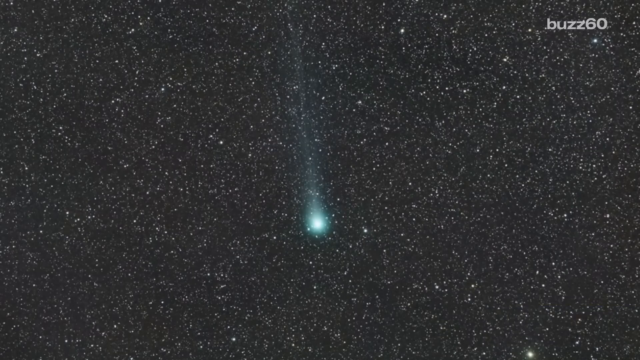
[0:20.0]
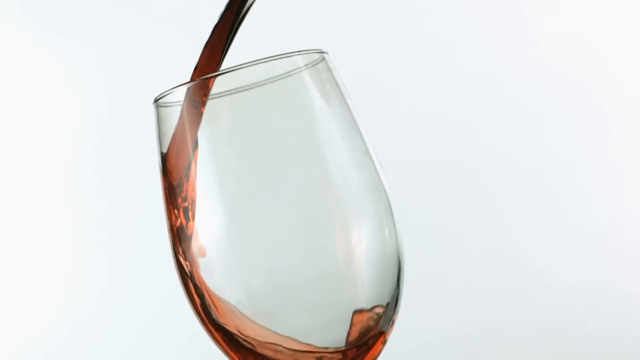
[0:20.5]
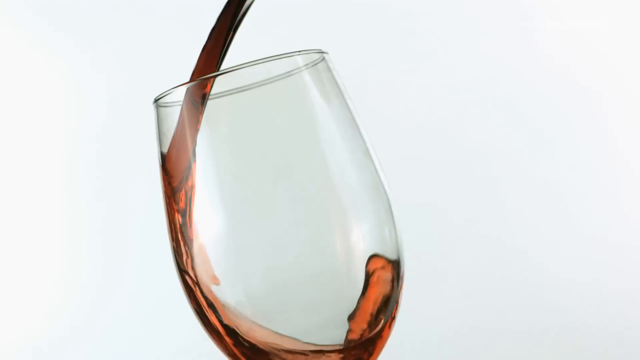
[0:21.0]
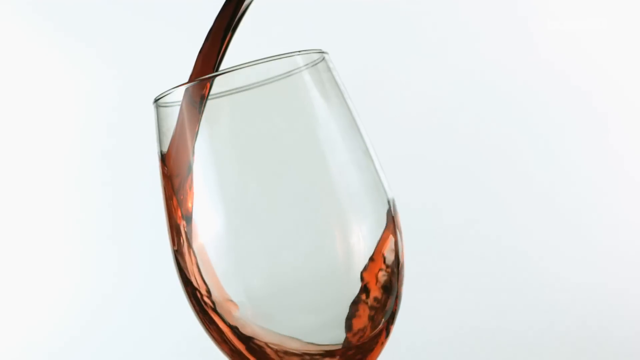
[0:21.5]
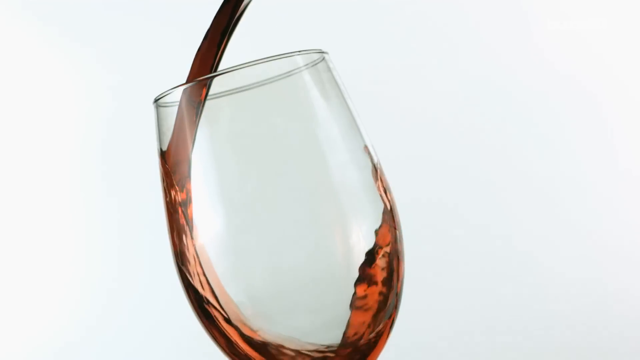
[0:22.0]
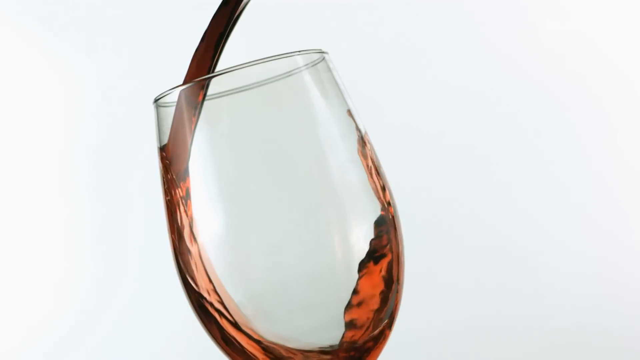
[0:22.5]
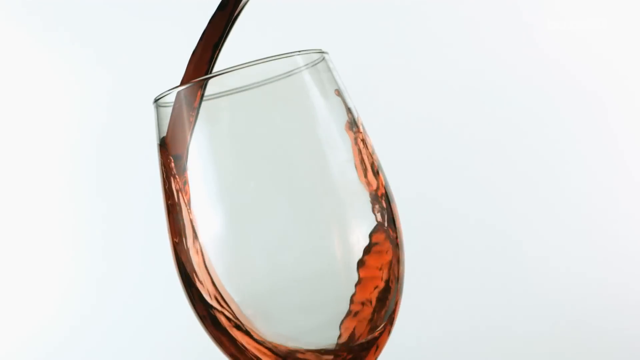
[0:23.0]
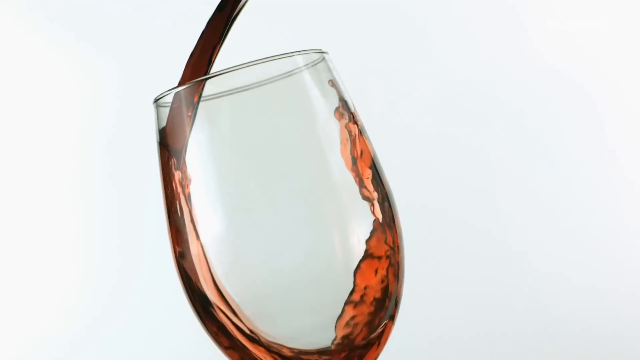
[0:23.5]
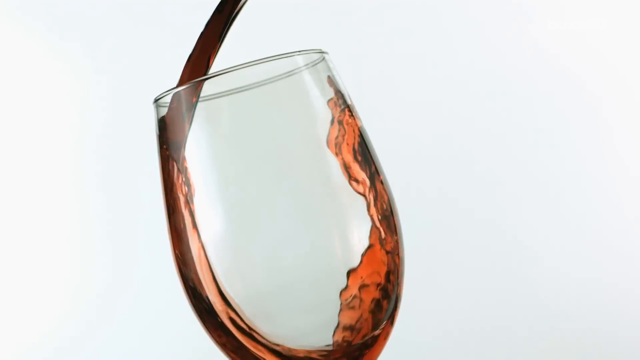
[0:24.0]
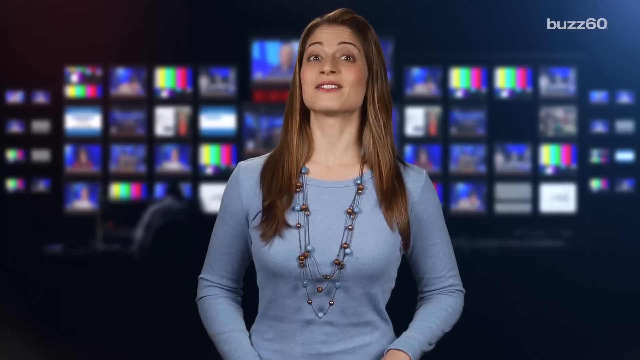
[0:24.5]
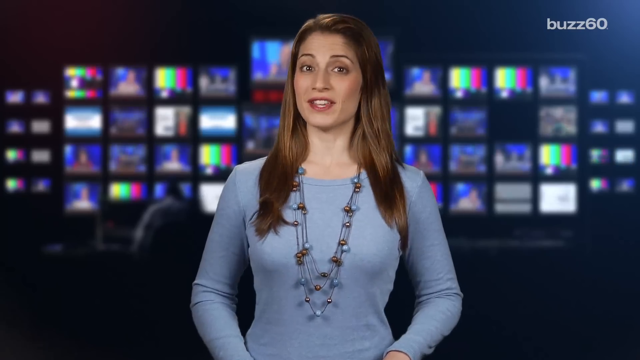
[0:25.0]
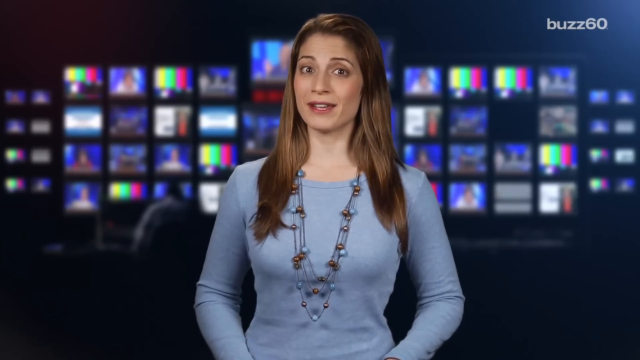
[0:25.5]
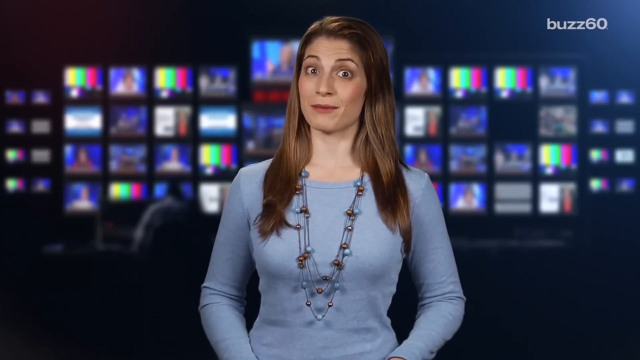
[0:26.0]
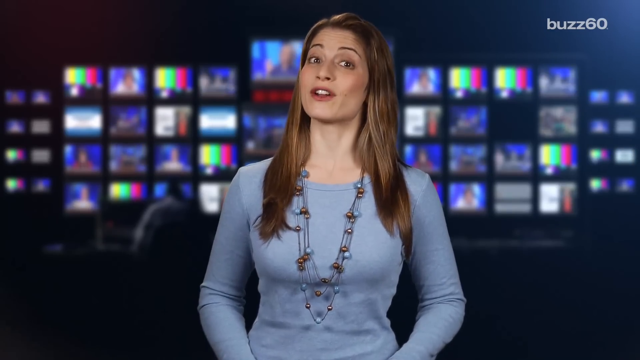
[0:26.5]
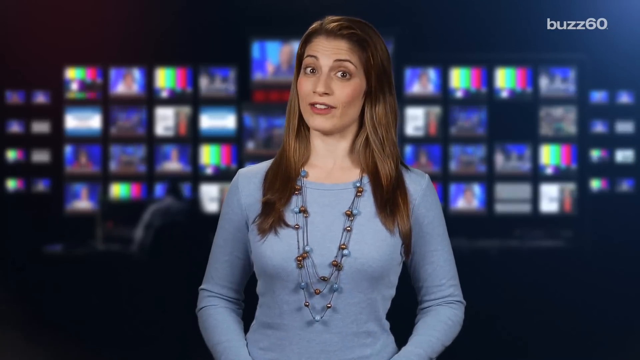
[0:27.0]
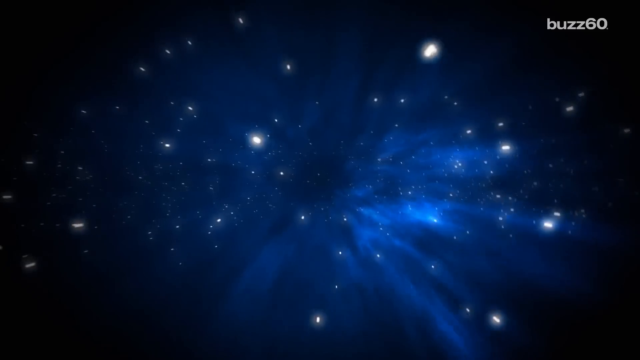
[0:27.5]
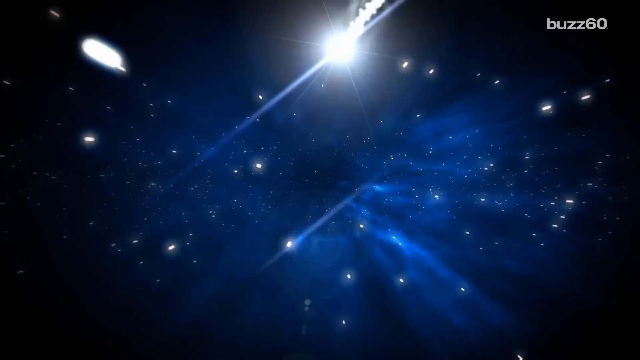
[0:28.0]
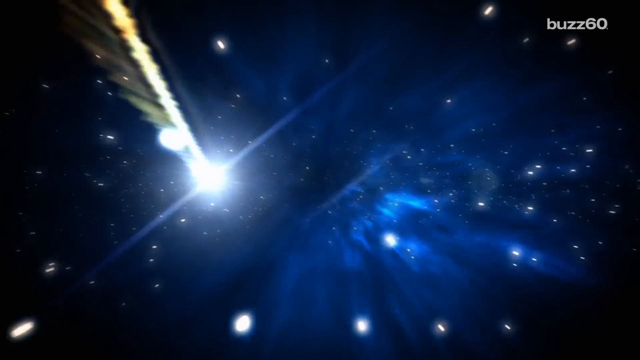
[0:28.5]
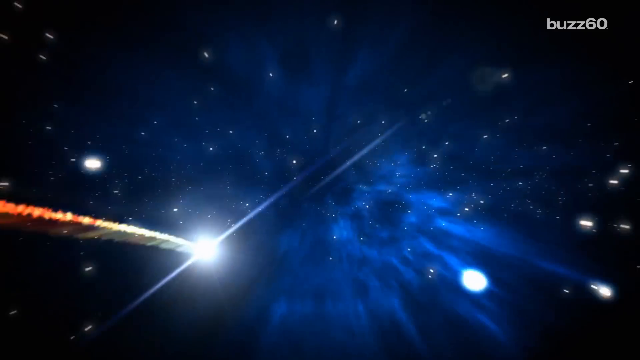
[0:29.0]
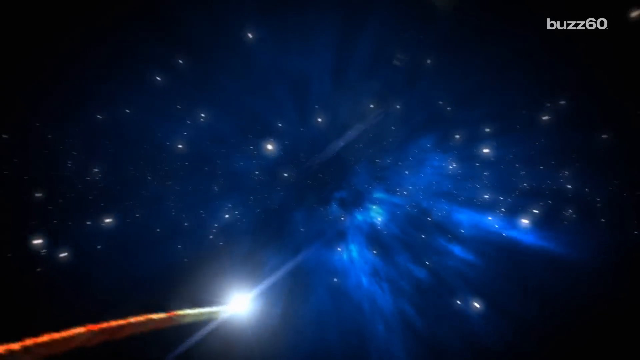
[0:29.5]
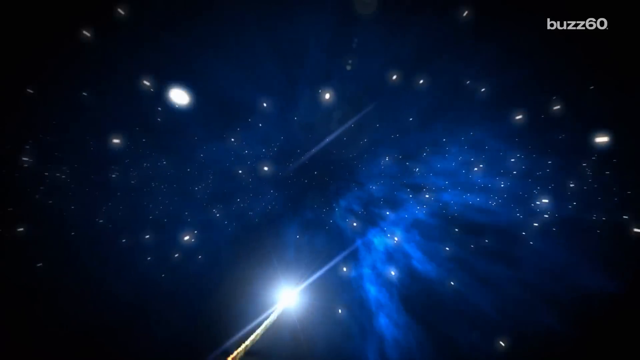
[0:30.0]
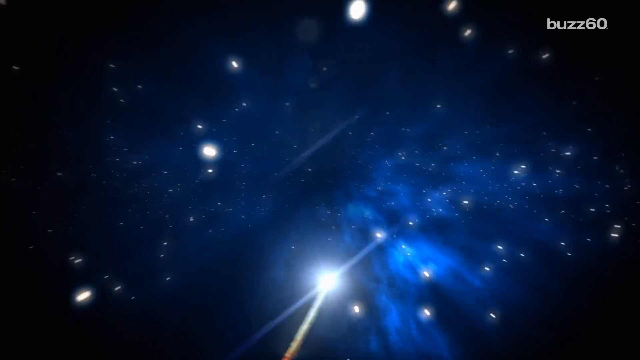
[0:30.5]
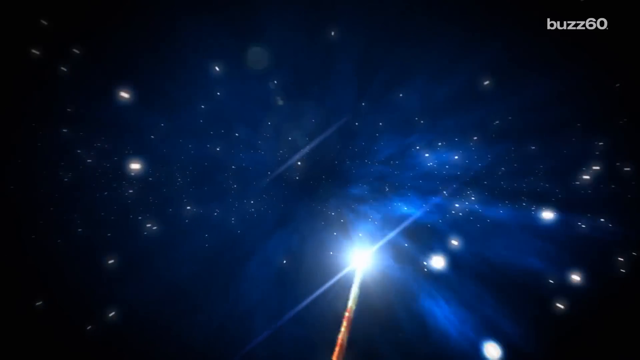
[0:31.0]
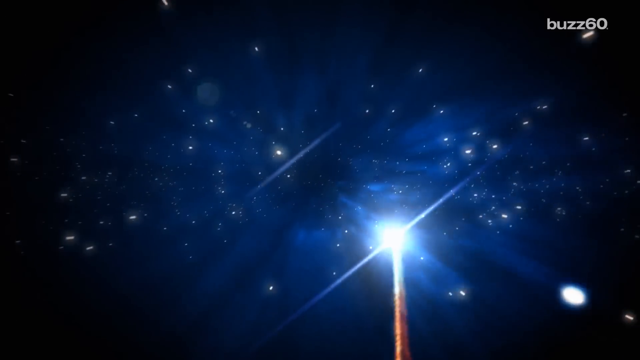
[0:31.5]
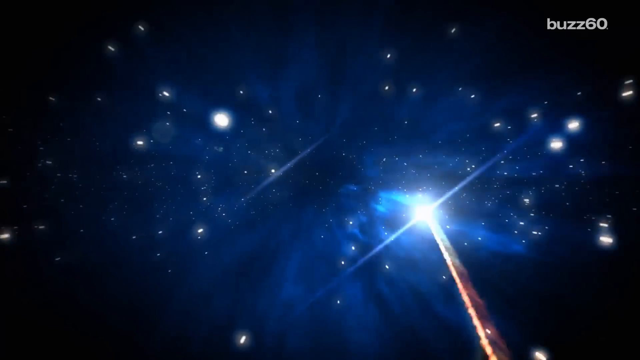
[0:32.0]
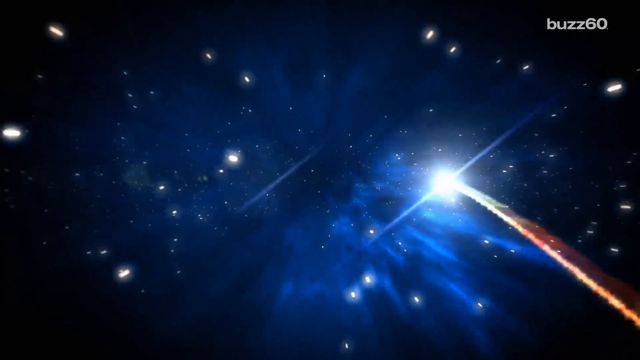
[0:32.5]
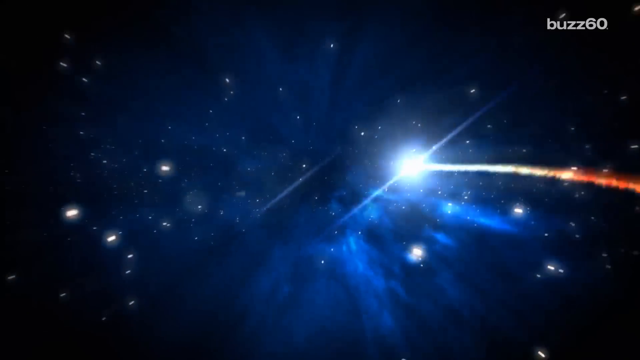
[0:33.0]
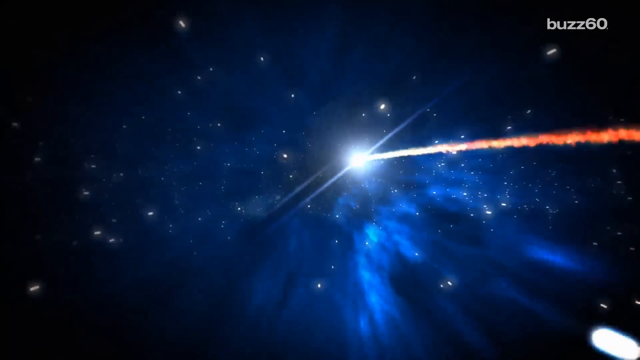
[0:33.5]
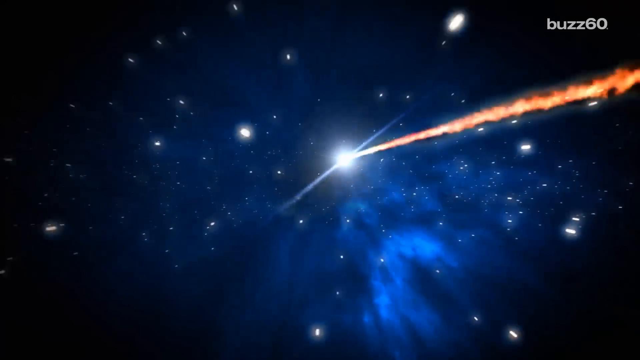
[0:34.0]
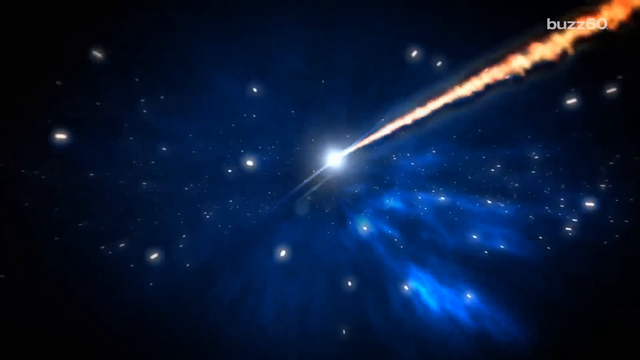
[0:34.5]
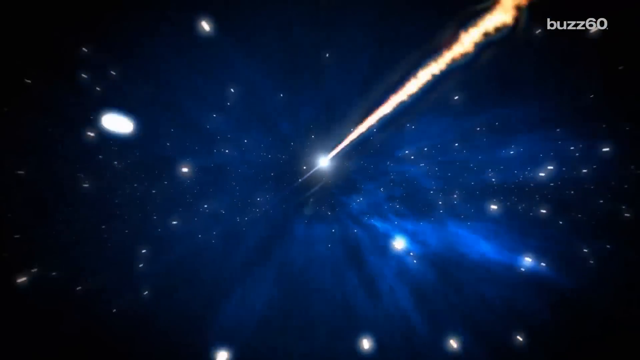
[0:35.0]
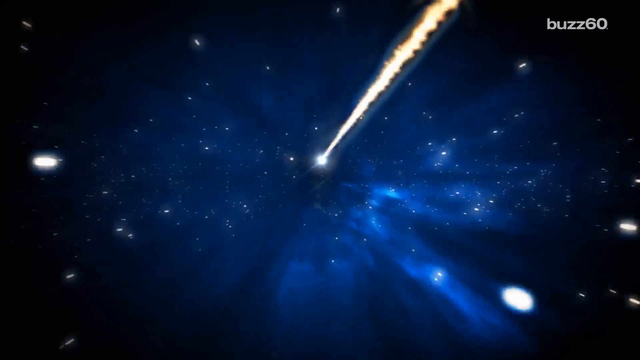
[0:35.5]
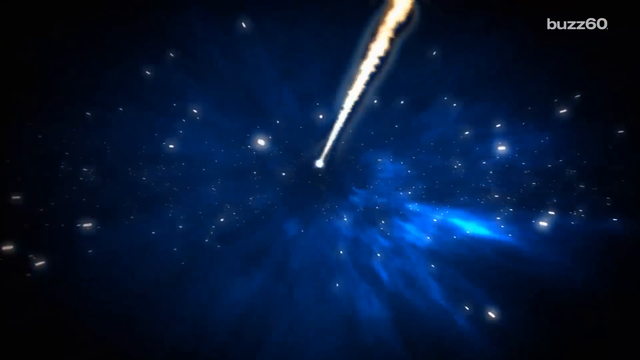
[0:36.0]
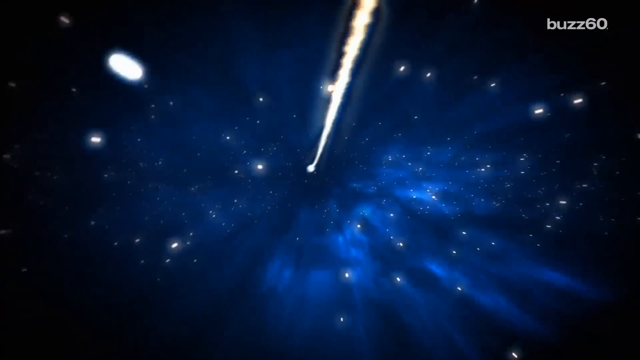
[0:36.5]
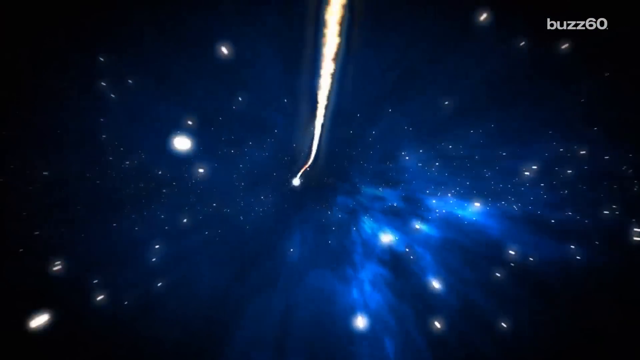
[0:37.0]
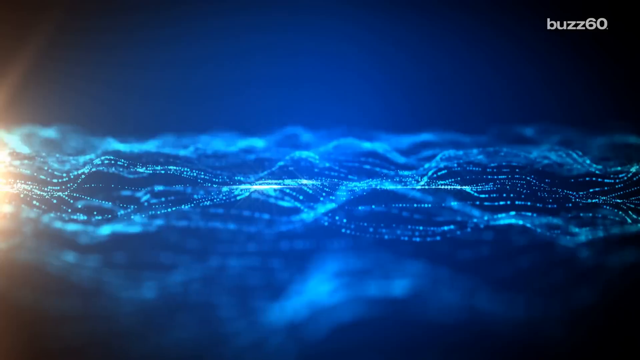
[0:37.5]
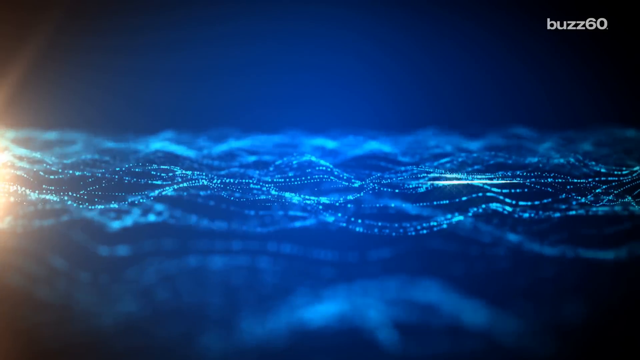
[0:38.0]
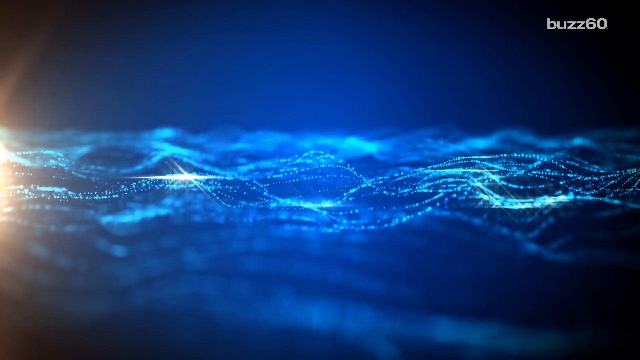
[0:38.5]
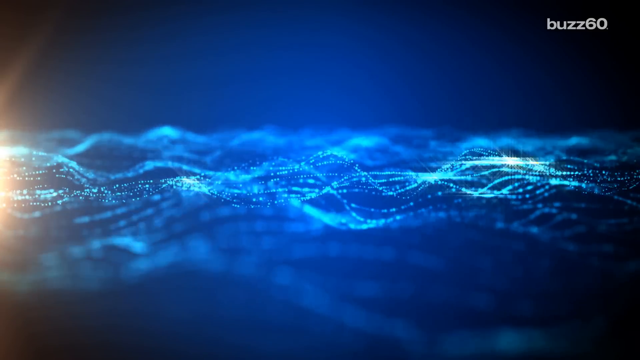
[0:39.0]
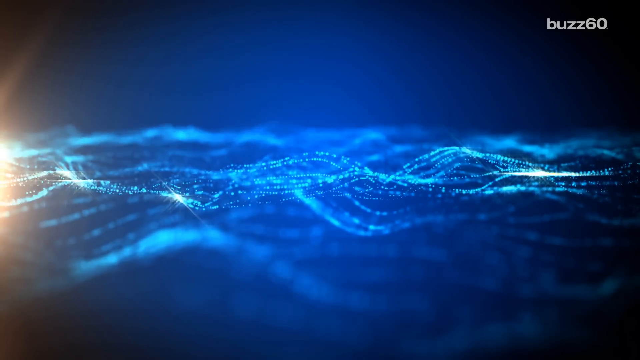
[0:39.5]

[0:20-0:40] What seems to be water or a beverage goes into a glass. A light passes through the sky.